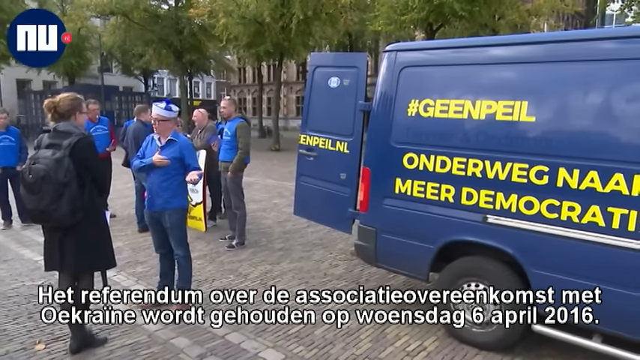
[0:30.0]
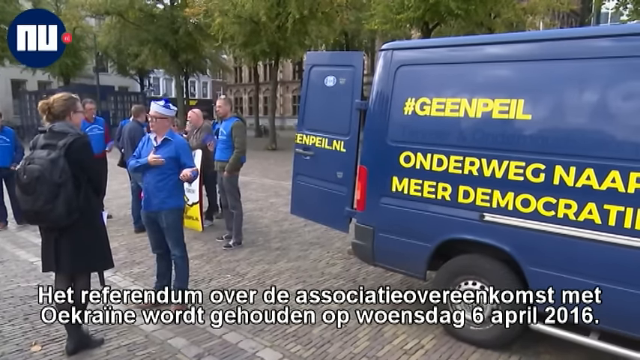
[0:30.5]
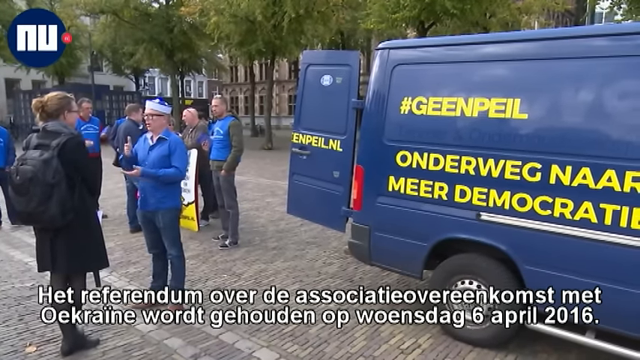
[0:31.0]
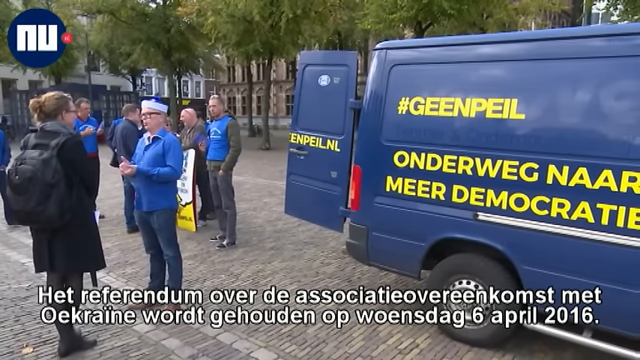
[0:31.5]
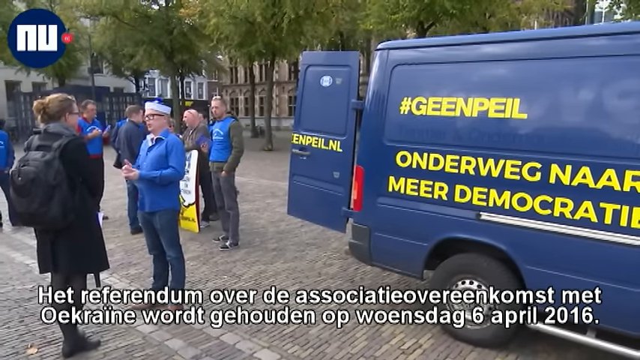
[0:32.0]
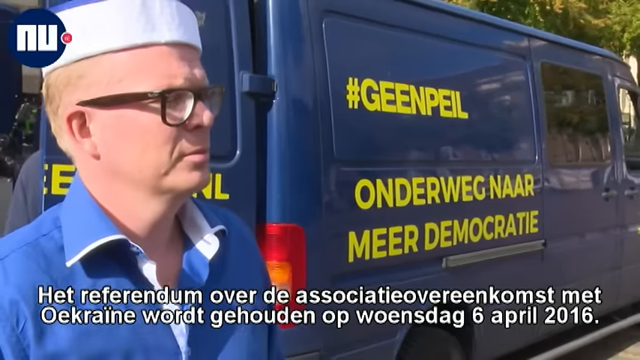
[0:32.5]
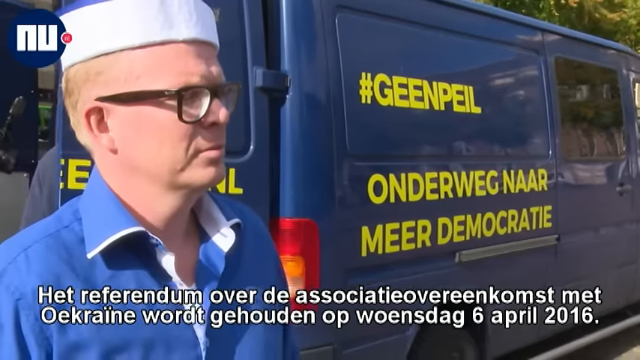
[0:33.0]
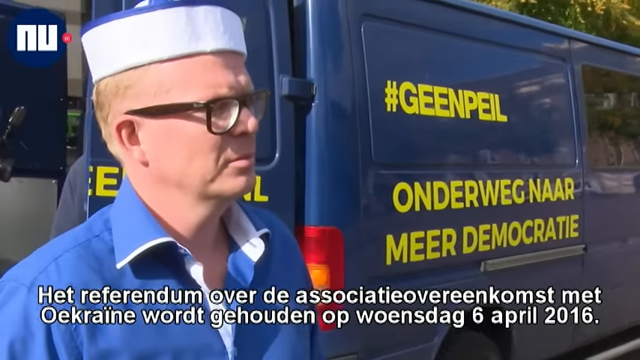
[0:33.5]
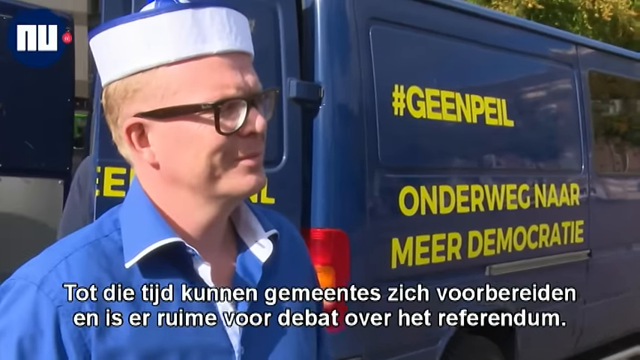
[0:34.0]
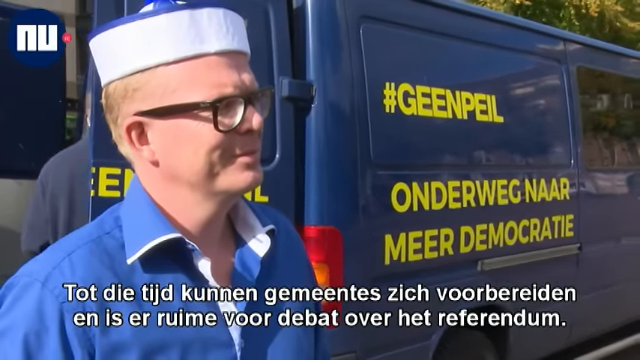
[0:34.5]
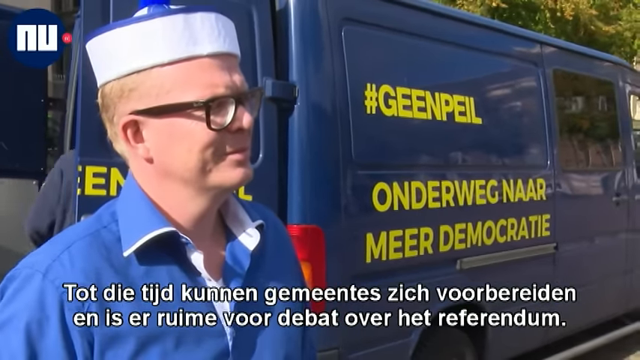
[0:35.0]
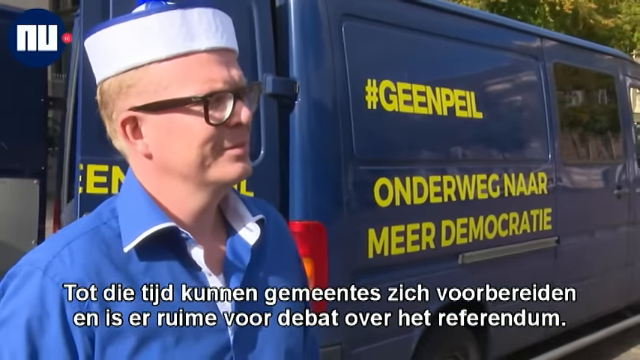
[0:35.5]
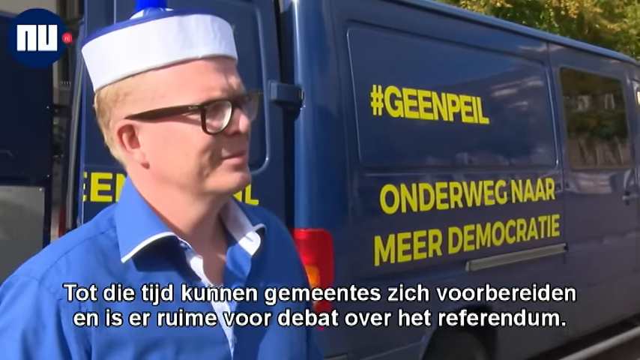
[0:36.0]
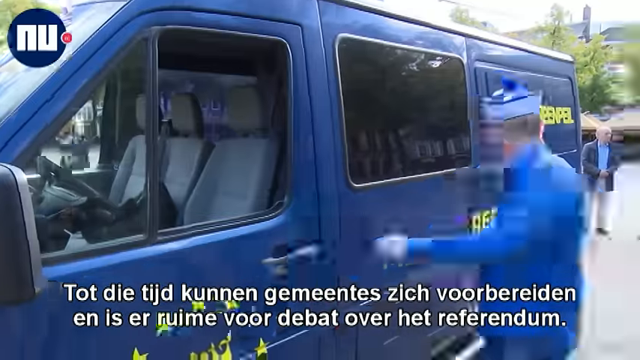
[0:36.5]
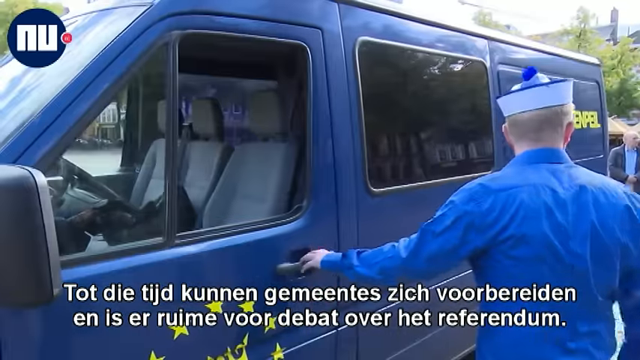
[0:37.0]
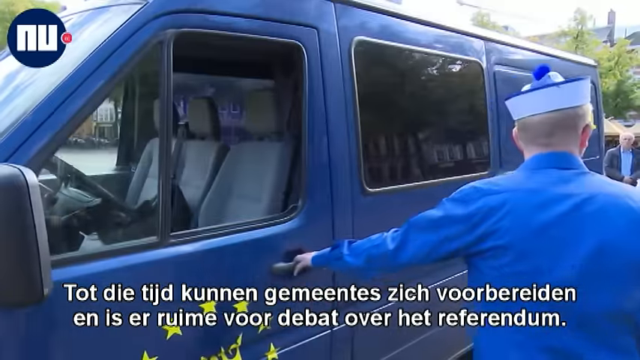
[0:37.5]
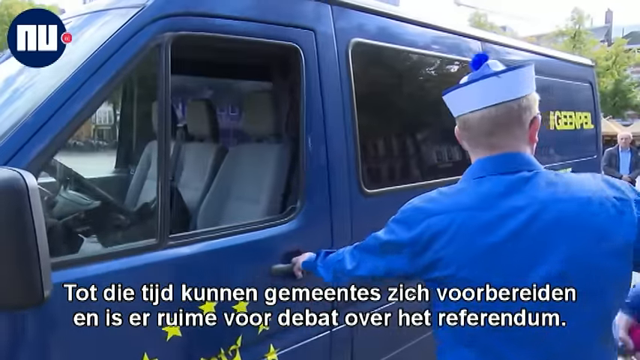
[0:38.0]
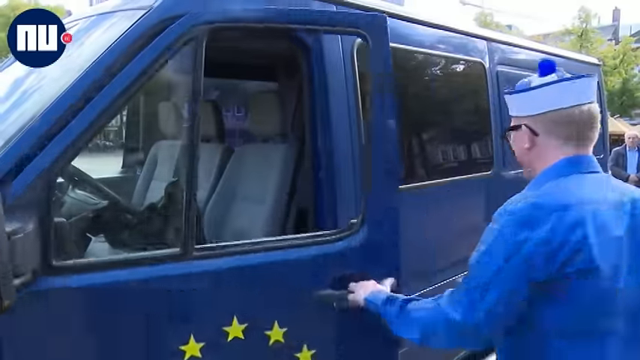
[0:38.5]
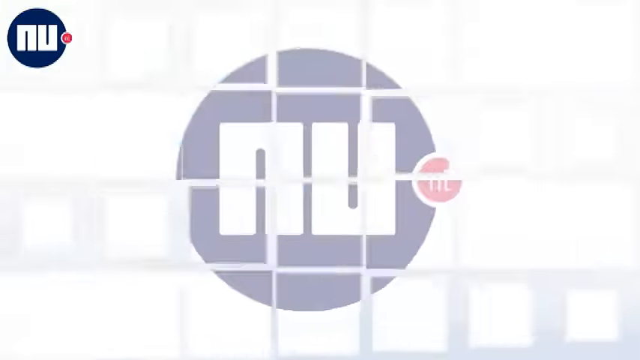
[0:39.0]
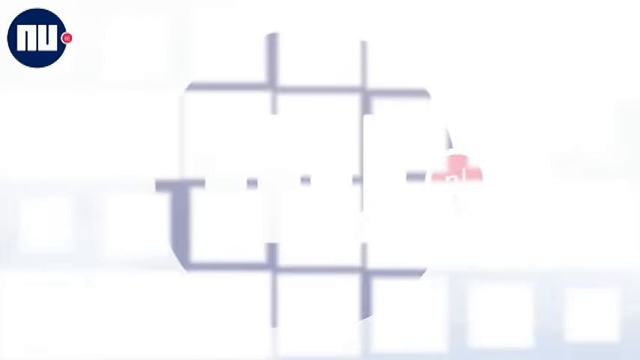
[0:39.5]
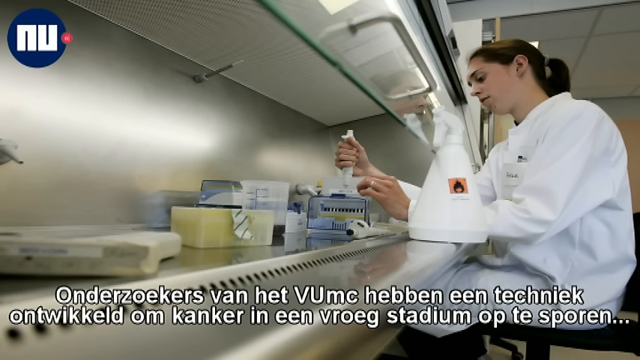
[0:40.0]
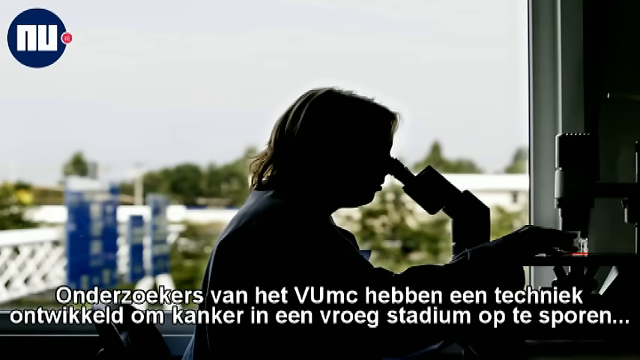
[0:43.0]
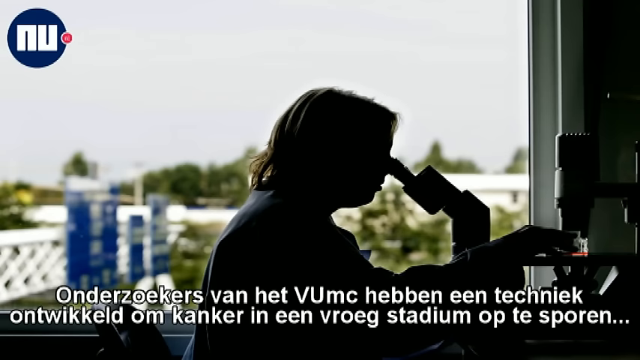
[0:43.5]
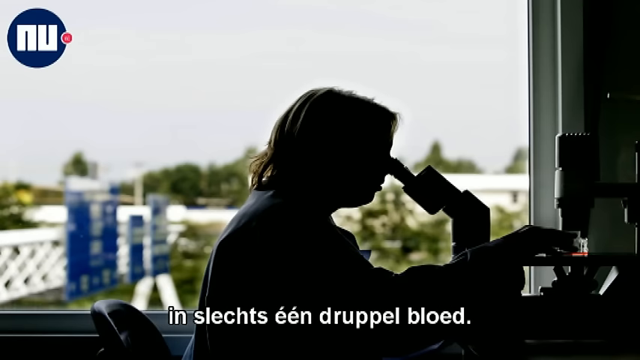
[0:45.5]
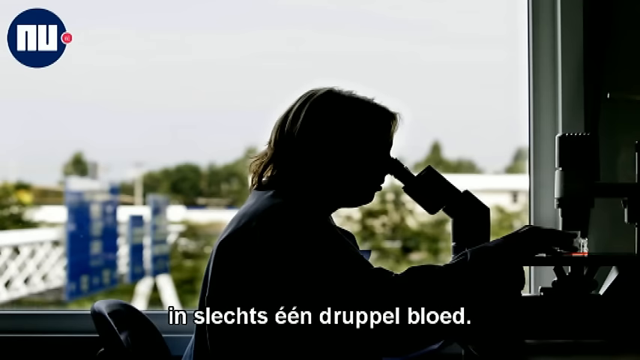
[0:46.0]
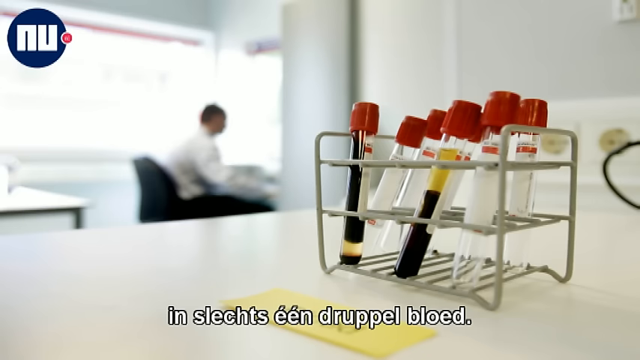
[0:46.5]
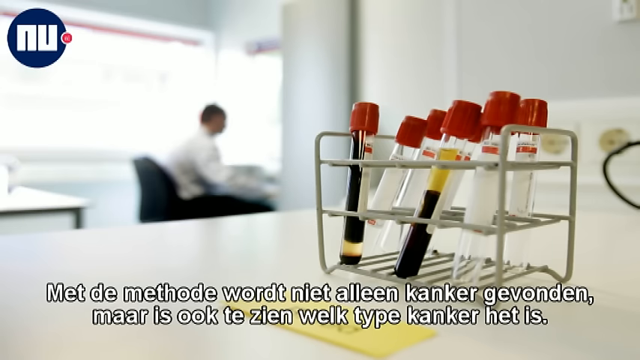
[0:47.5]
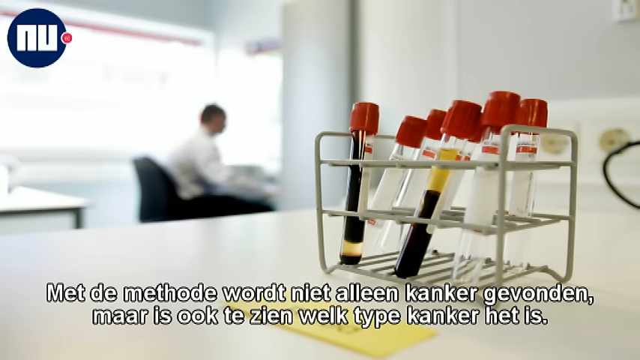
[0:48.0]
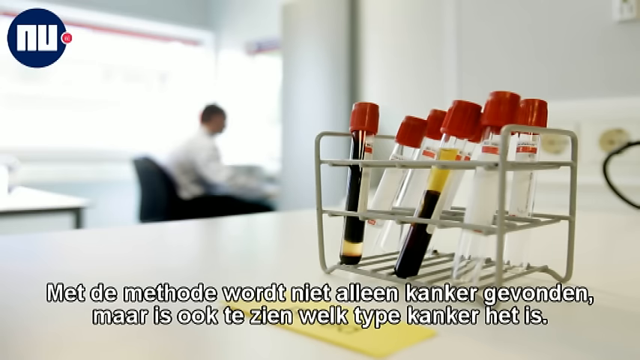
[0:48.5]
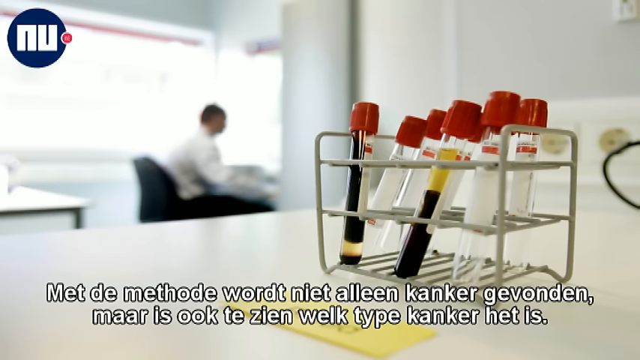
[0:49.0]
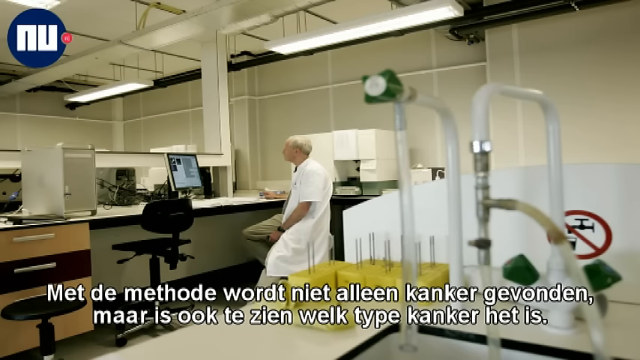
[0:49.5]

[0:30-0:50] The blue van with yellow writing is shown, with people having a discussion behind it. The man being interviewed wears a blue shirt with an open collar and a blue hat with a wide white rim. The only recognizable word in the caption is referendum, so the discussion is possibly about the Brexit referendum. The scene then changes to what looks like a lab. Lab technicians hold up test tubes, one lady looks into a microscope, and a gentleman sits at a desk in the background with a number of vials filled with blood in the foreground. This part of the news seems to concern a clinic, blood testing facility or laboratory, showing the professionals who work there. Most of the people are dressed in white lab coats.